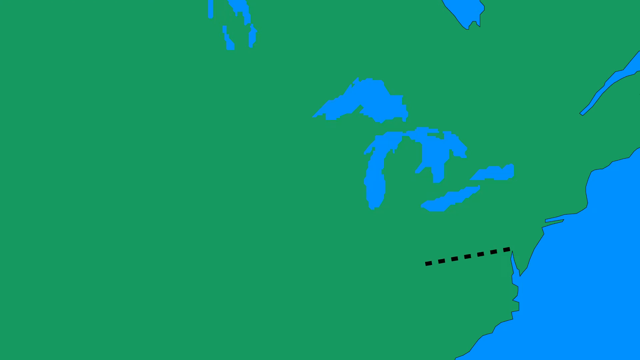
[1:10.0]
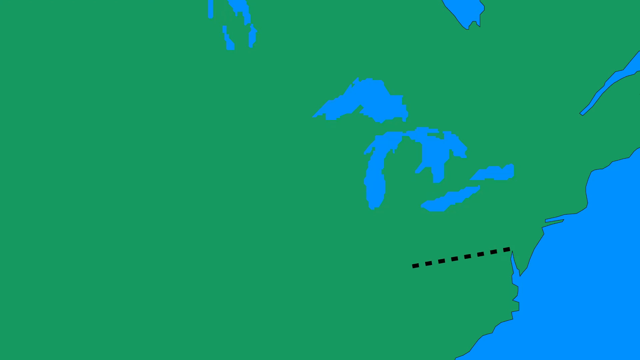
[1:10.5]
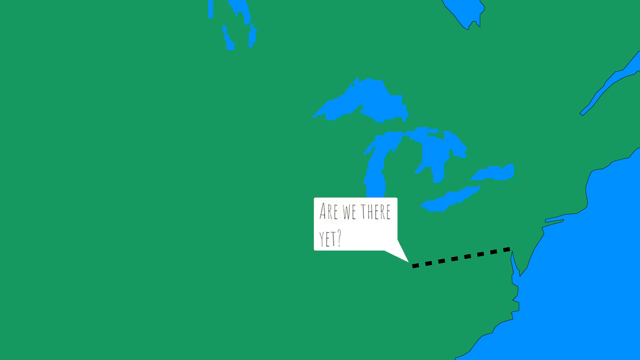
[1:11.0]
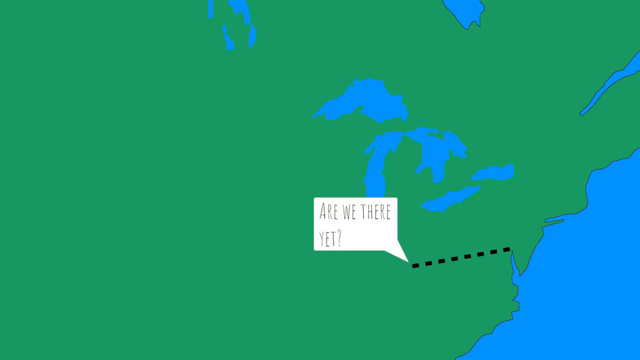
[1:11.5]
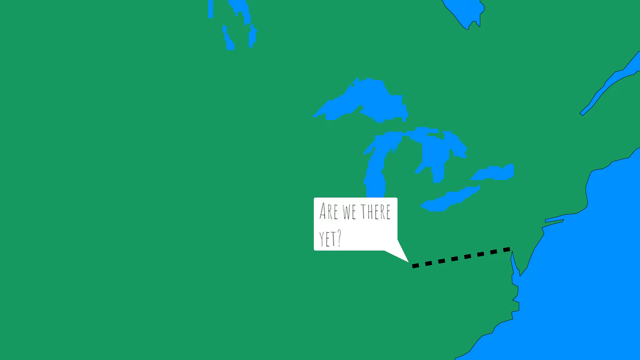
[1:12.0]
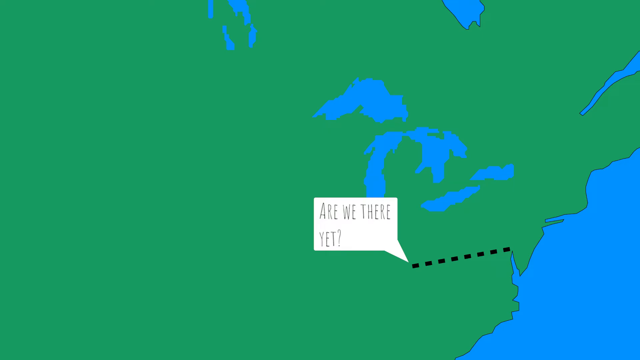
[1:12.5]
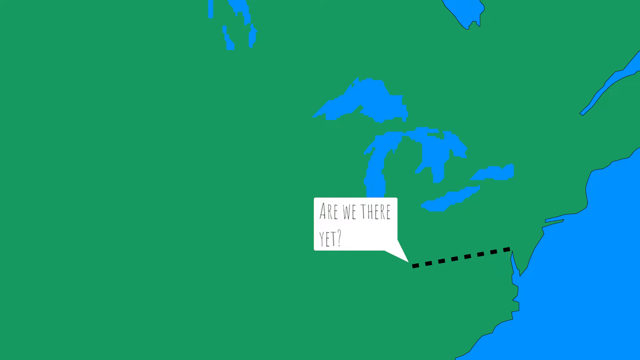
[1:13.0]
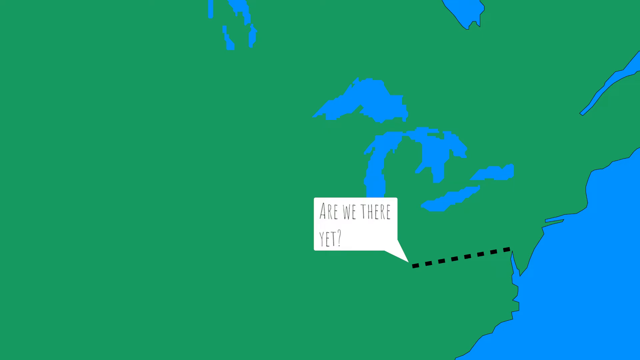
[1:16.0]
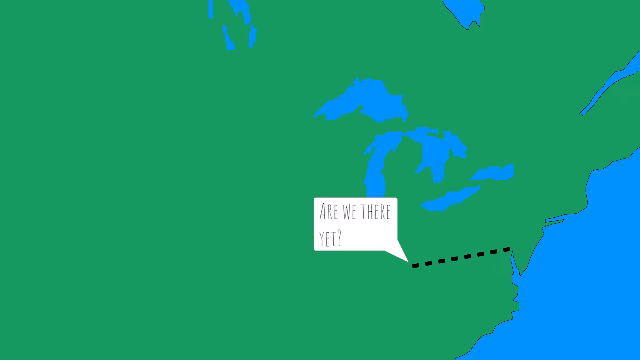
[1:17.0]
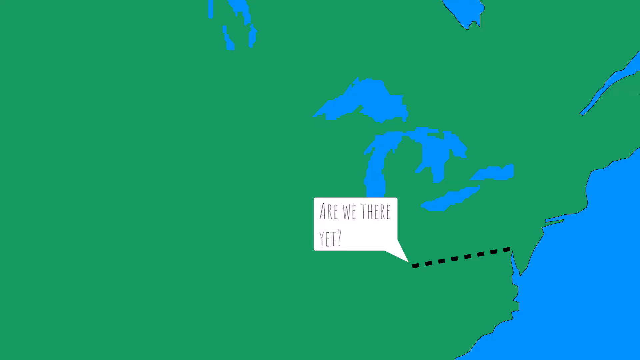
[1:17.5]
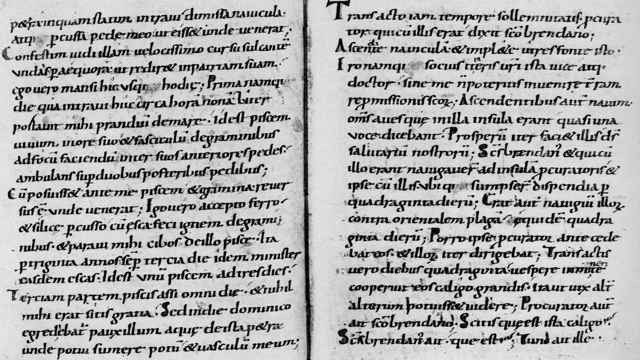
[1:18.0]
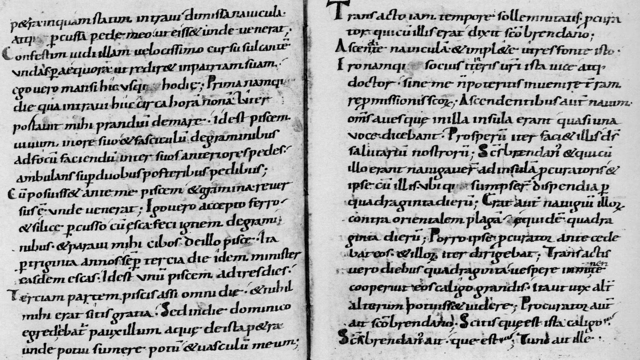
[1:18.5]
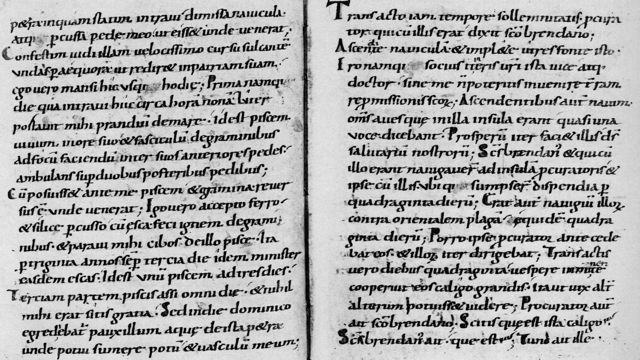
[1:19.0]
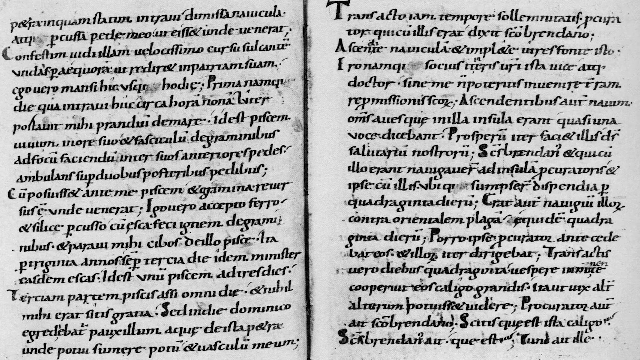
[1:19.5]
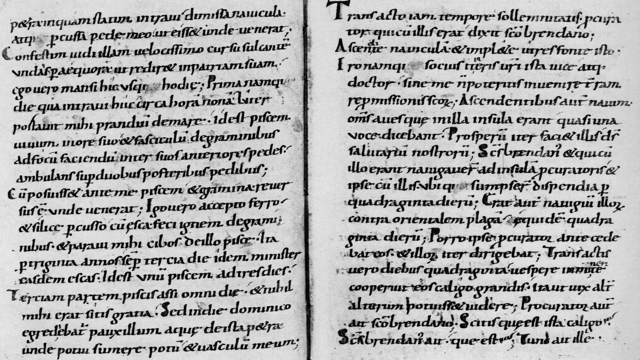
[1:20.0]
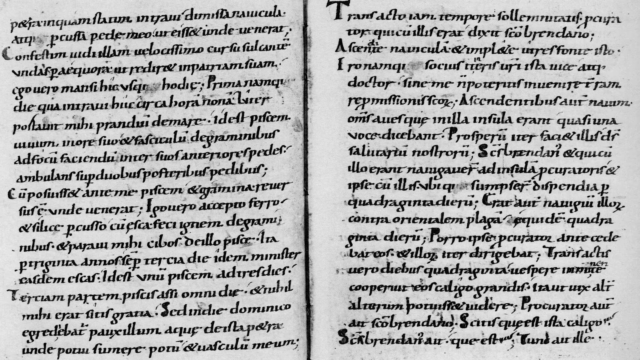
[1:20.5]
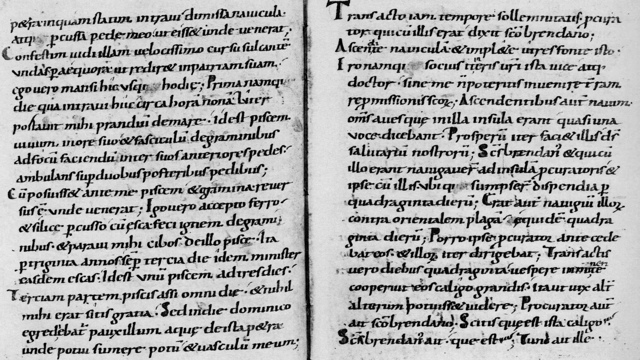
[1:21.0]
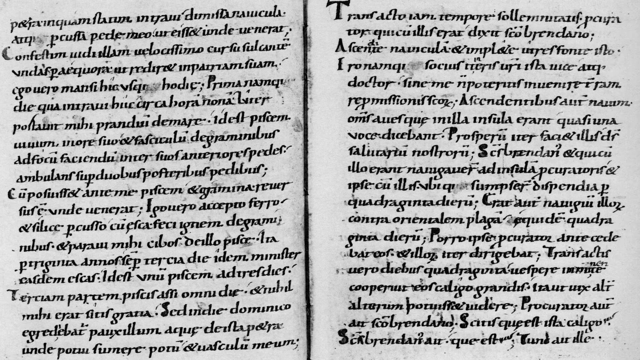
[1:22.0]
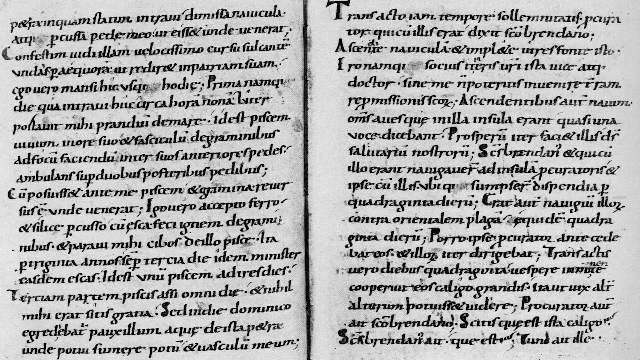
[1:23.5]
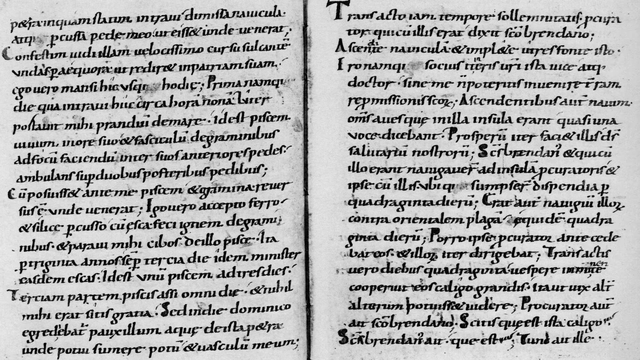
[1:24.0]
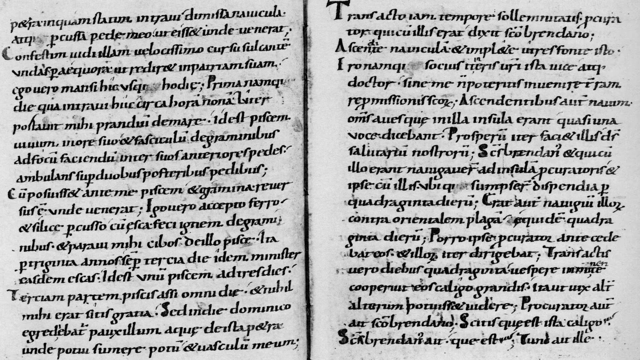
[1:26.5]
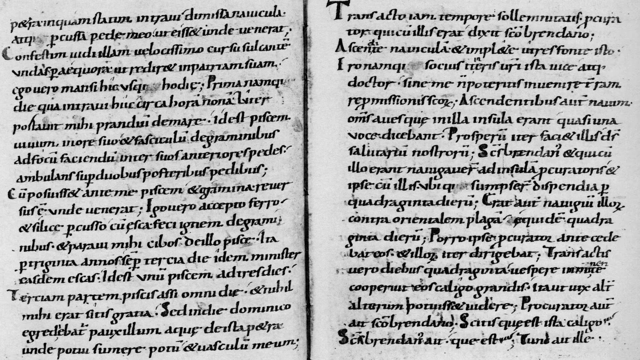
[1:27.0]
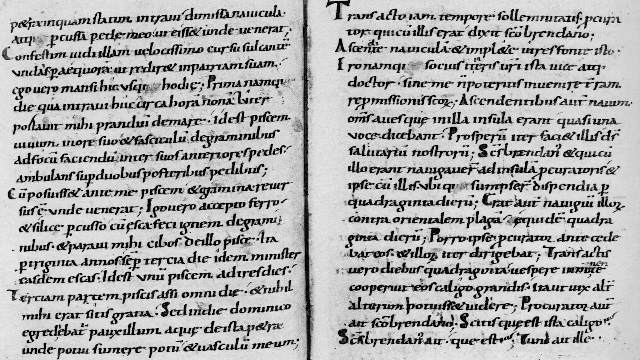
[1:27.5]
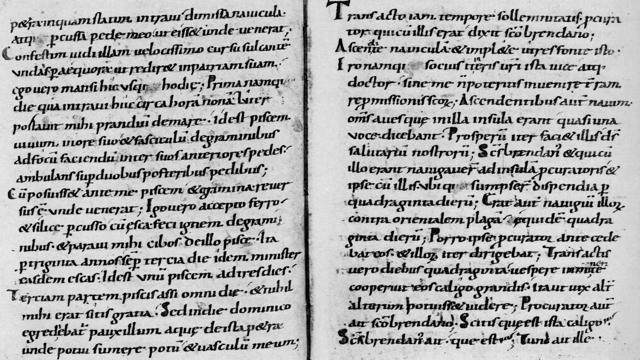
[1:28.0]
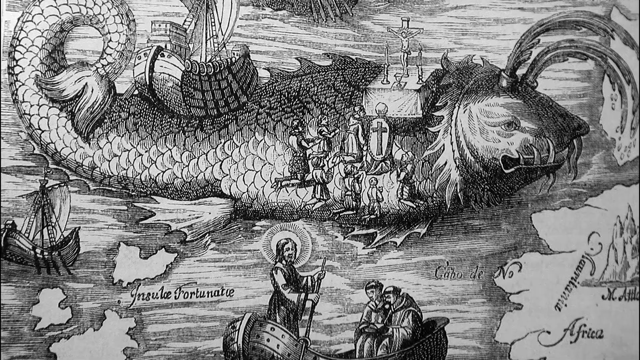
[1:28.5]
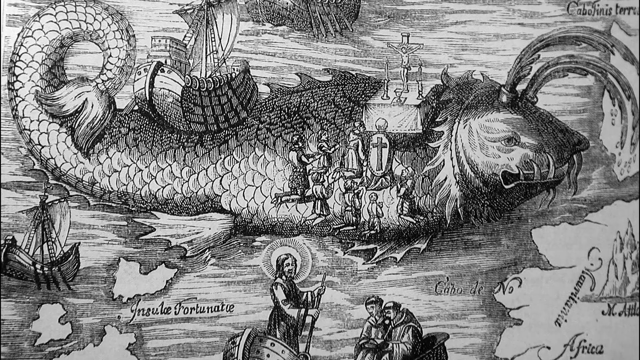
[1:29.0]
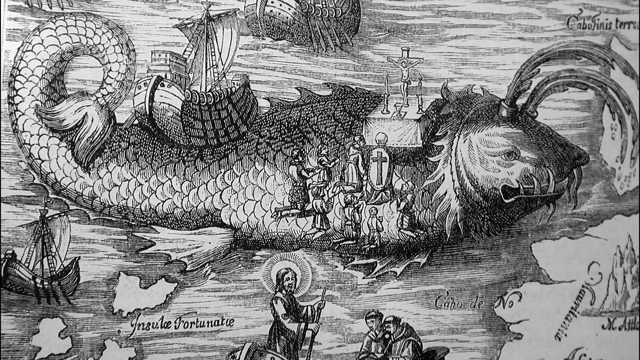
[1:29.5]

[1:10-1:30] A dotted-line trail runs from the east coast of the Americas, with the Great Lakes visible just above the dotted line. Text on the screen says "are we there yet?" Next comes a very complex and detailed old drawing of a large fish with people on it. There is a sailboat on the back of the fish, and another sailboat in the lower left. People move around all over the fish; people who look like they are from the Crusades are climbing up the side of the fish's back just behind its head. In the lower part of the screen there appear to be some religious figures. The drawing shows Jesus on the cross.